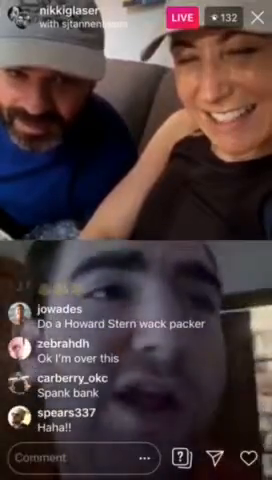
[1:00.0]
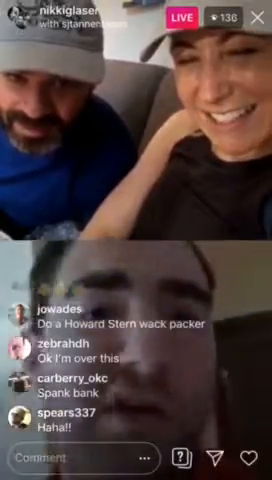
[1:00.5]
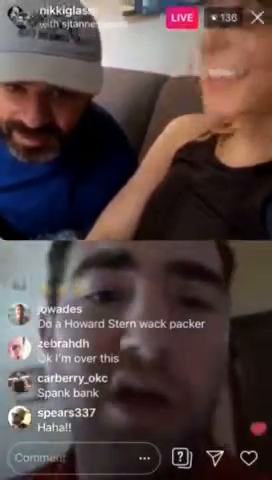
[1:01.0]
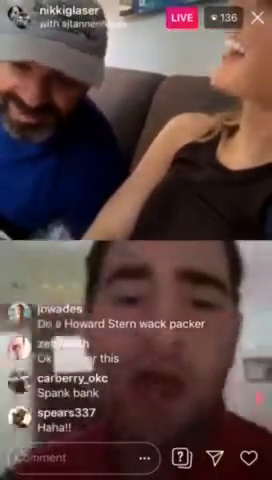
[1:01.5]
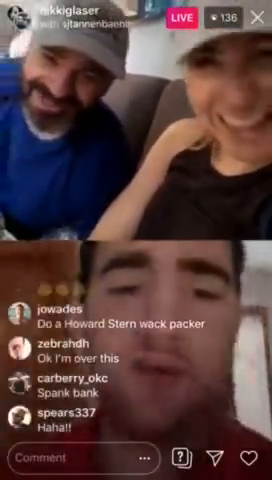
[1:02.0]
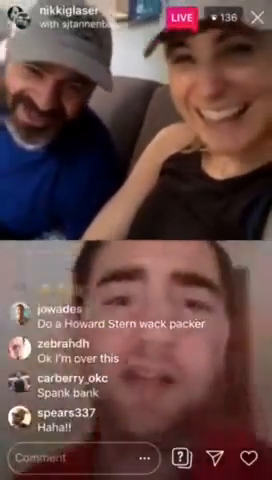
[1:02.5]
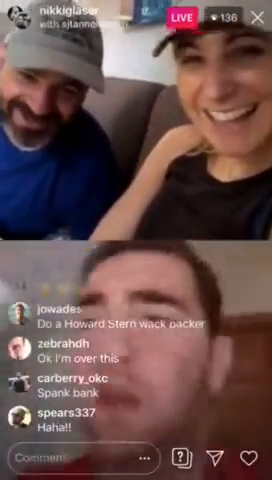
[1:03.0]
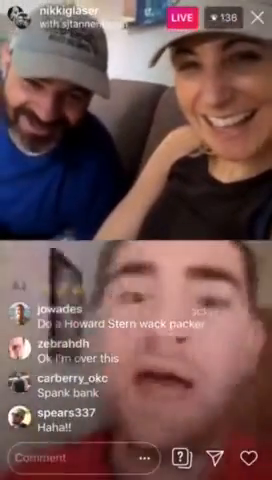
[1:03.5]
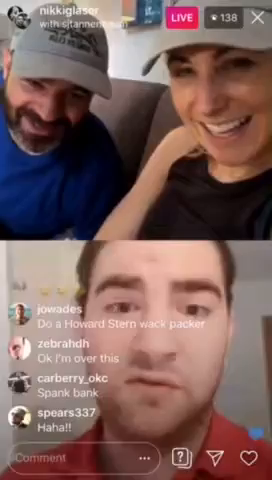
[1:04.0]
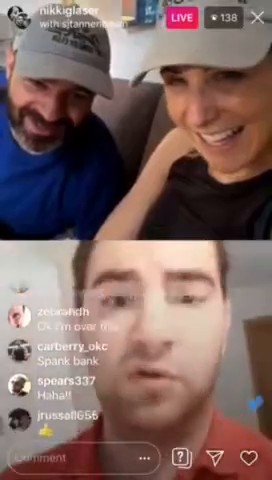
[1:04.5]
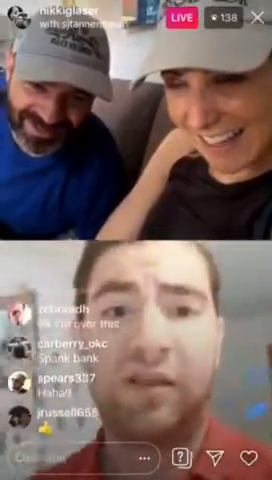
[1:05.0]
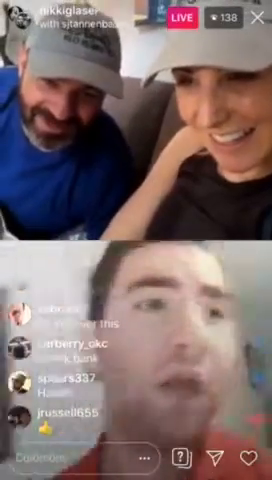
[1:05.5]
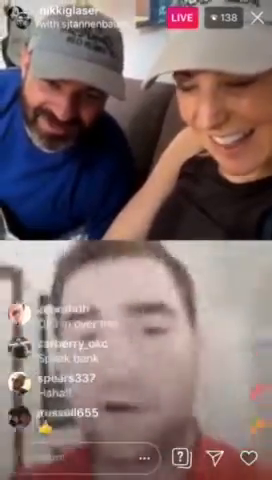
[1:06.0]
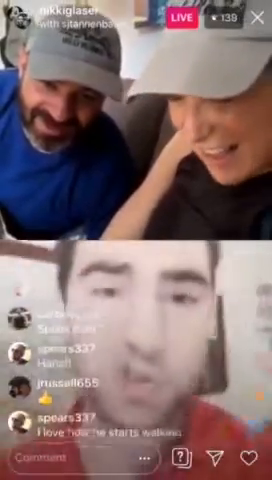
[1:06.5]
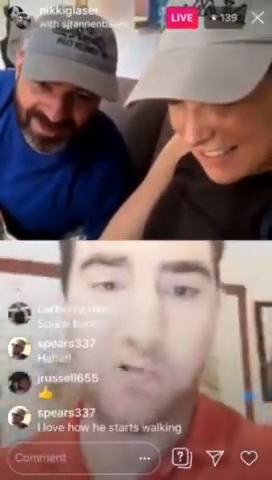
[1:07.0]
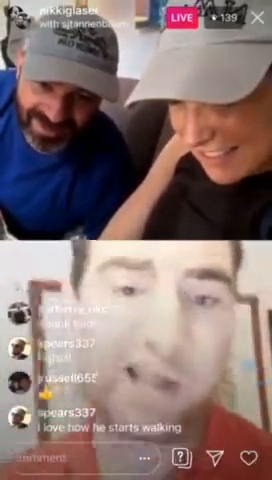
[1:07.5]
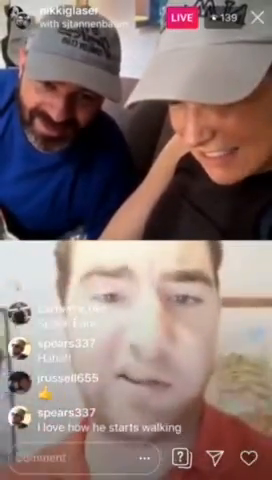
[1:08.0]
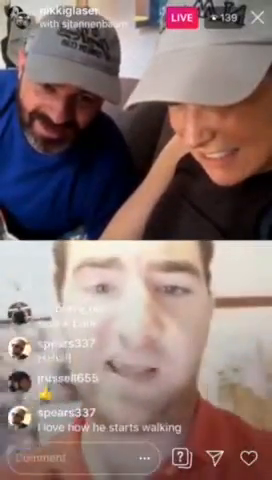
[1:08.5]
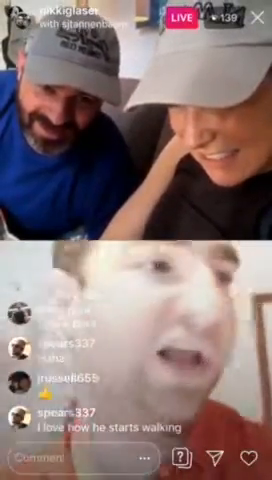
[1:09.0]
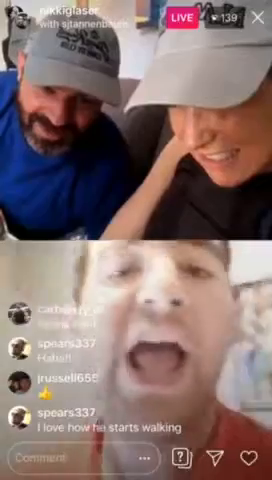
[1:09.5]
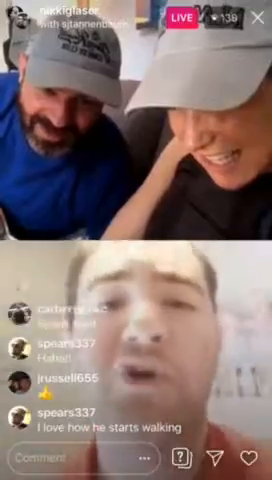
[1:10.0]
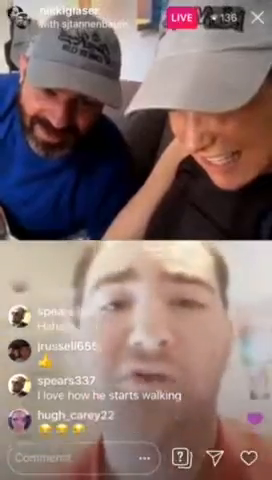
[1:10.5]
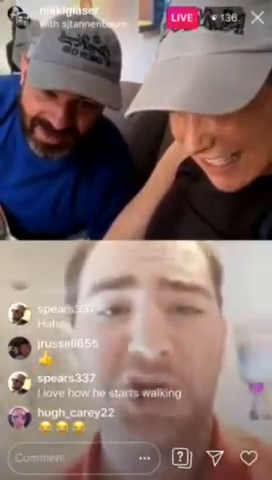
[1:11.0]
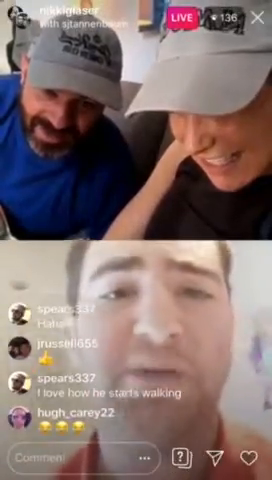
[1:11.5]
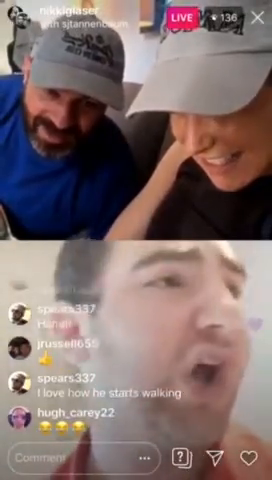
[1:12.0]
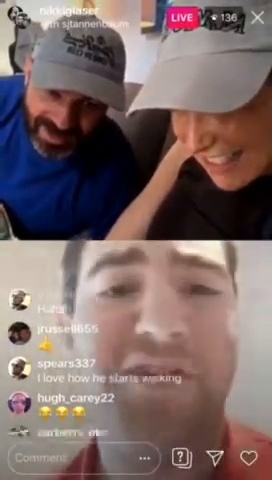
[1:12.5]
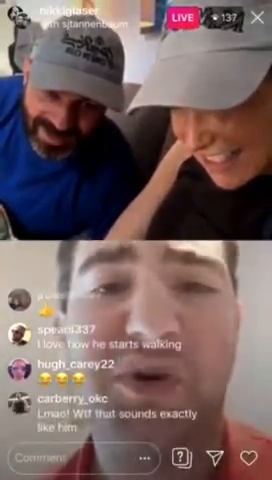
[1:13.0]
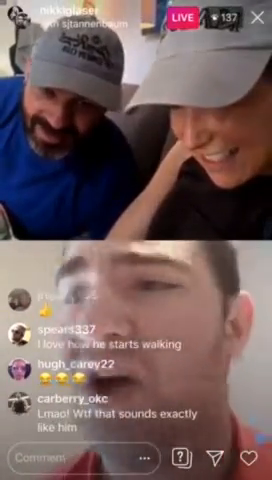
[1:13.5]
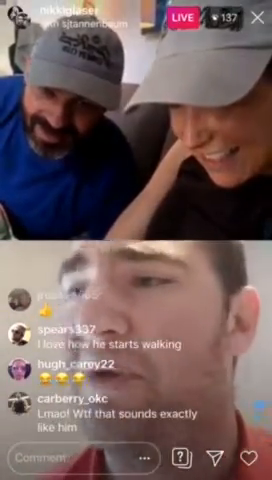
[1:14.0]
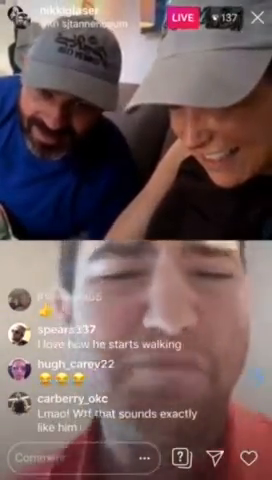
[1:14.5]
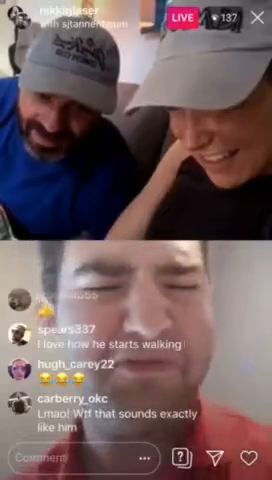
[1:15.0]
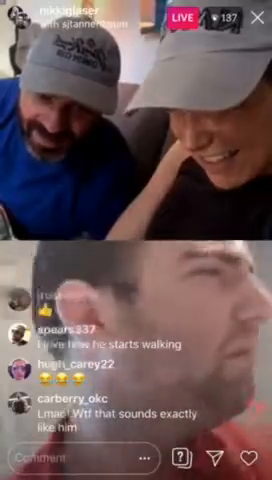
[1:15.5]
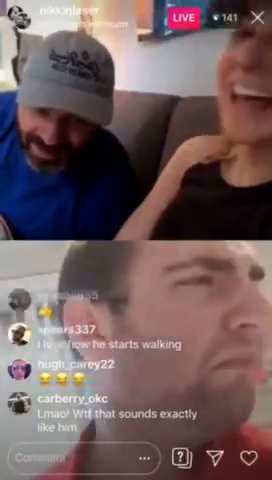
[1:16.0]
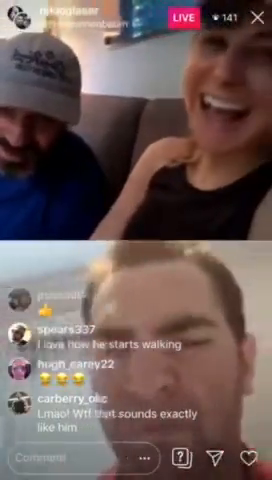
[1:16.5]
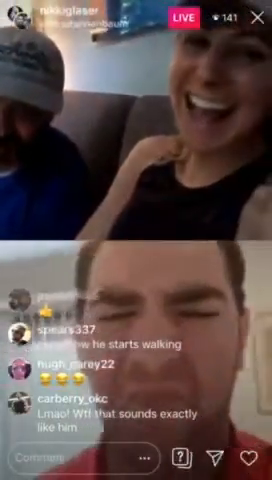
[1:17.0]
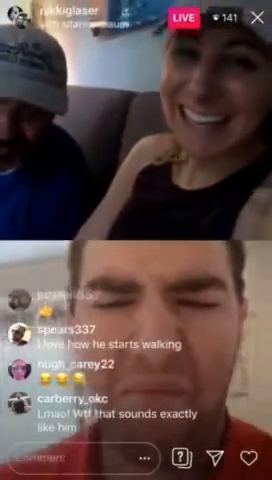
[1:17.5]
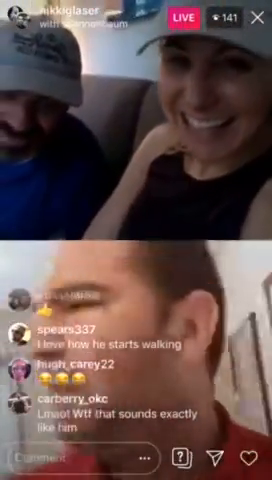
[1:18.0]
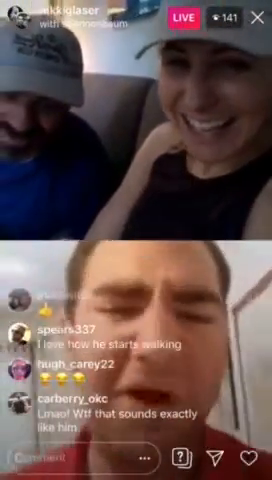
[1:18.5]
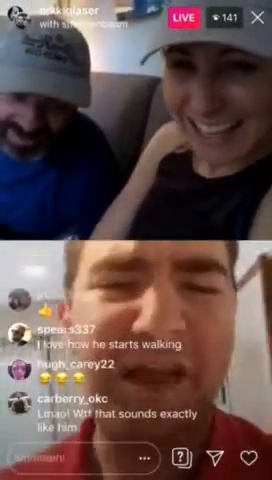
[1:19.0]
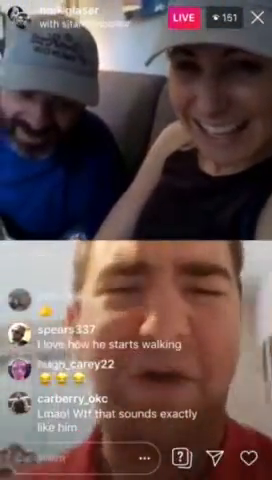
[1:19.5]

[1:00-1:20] The live stream is split top and bottom, with multiple icons across the bottom edge. On the left, just above the icons, various profile pictures and names with messages scroll up as people chat. Along the top edge are icons showing the current viewer count, a red one indicating the video is live, and one indicating it is being streamed by Nikki Glaser. In the top half, a man and a woman sit on a couch, the woman close to the camera and the man next to her leaning forward closer to the camera; both are smiling. In the bottom half, a man speaks to the camera while walking around the building he is in. The man and the woman tilt their heads down and lean a little closer to the camera. The man in the bottom makes a disgusted face, and the woman laughs.